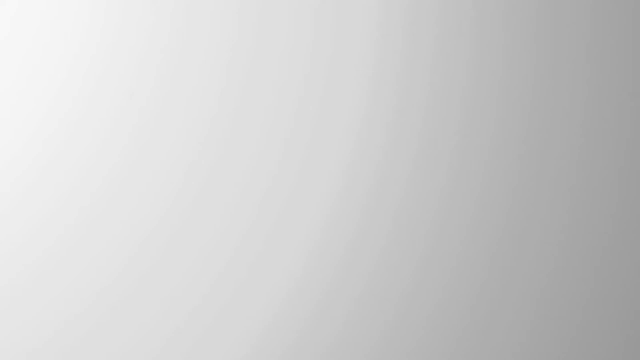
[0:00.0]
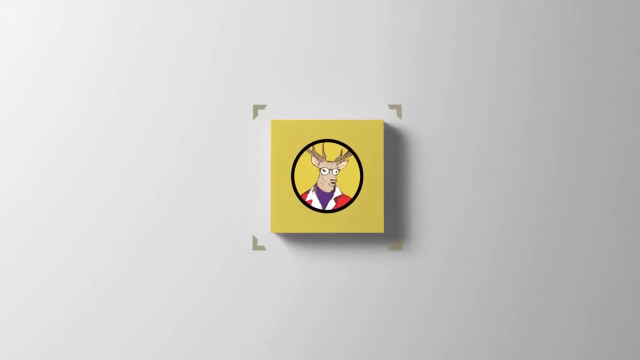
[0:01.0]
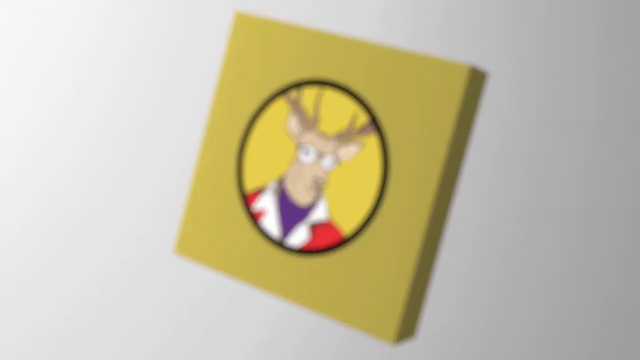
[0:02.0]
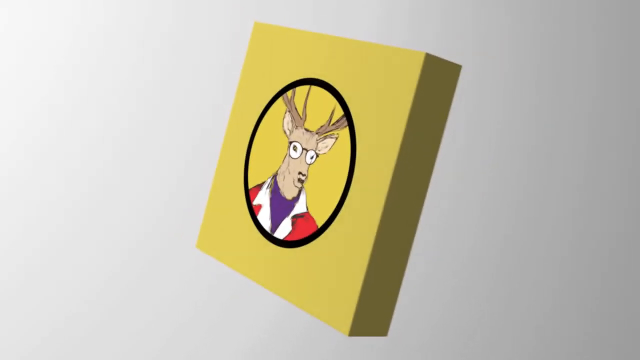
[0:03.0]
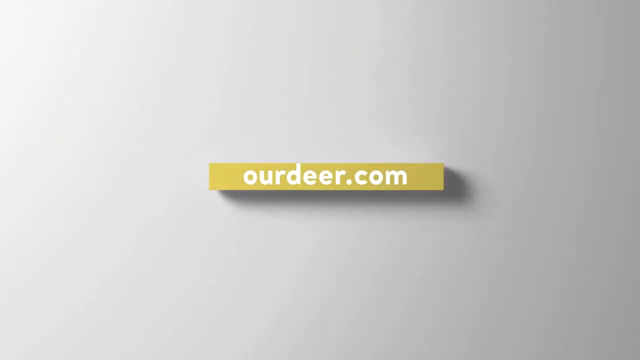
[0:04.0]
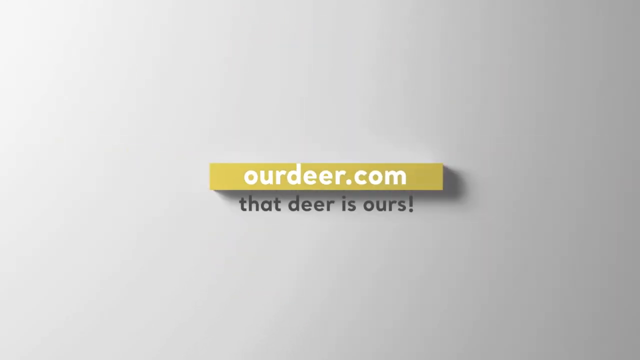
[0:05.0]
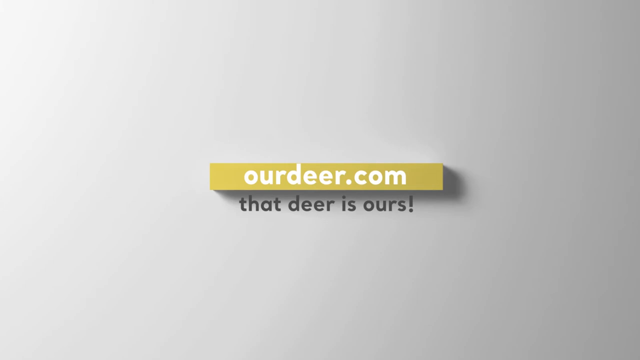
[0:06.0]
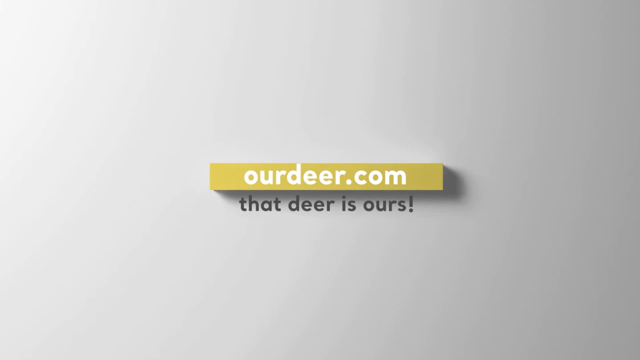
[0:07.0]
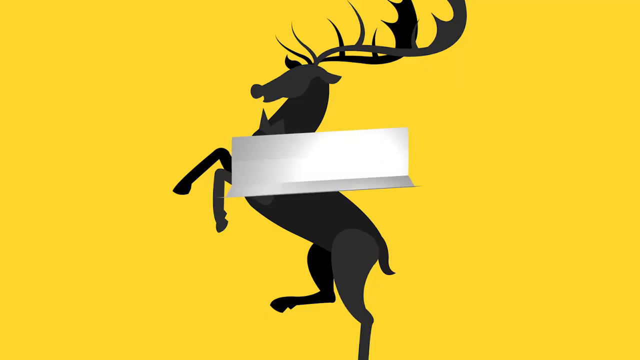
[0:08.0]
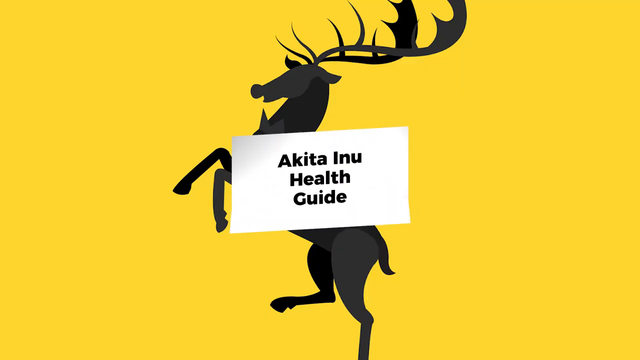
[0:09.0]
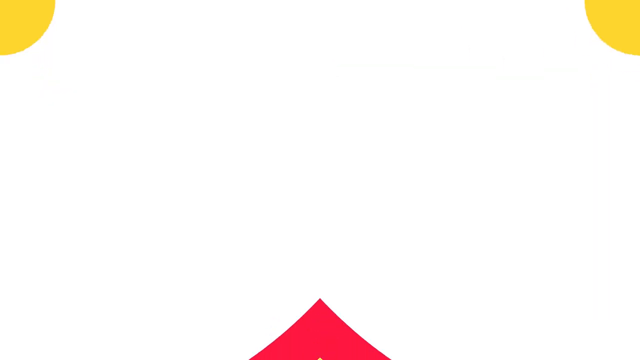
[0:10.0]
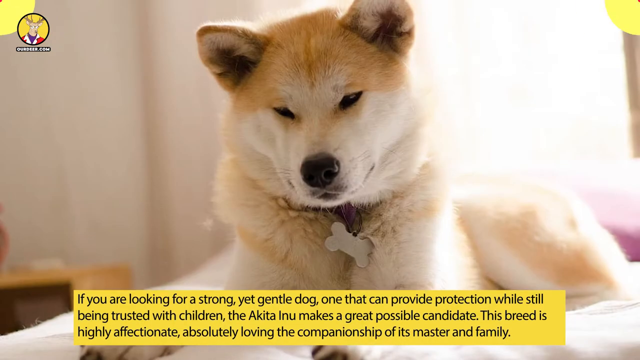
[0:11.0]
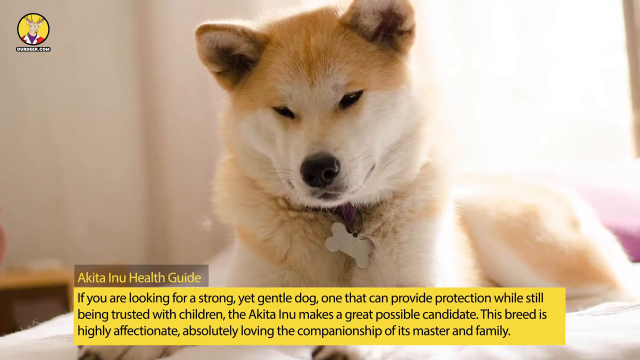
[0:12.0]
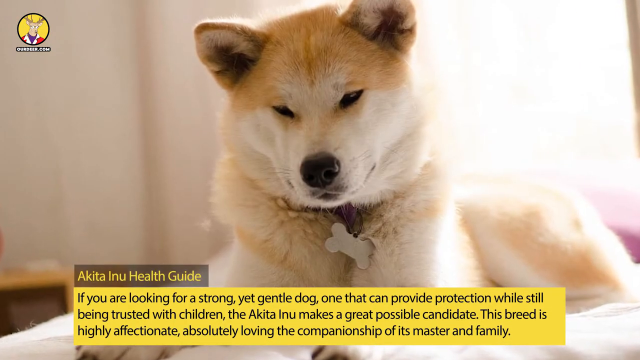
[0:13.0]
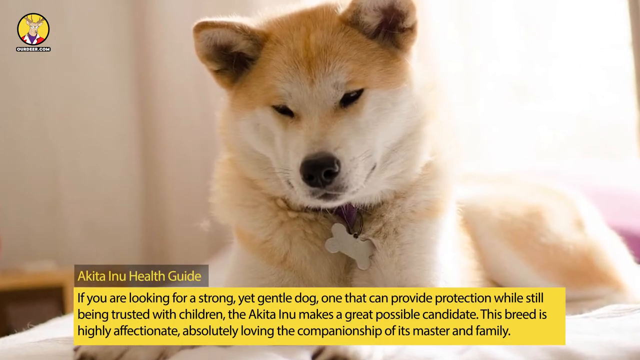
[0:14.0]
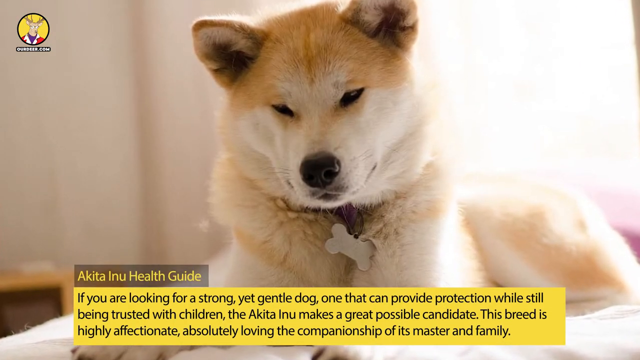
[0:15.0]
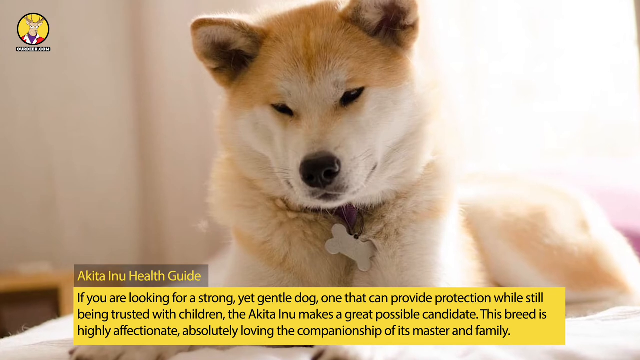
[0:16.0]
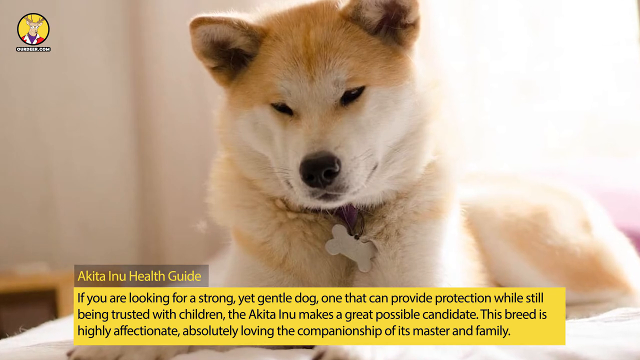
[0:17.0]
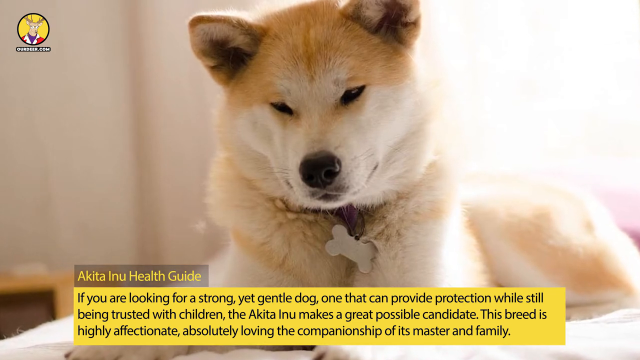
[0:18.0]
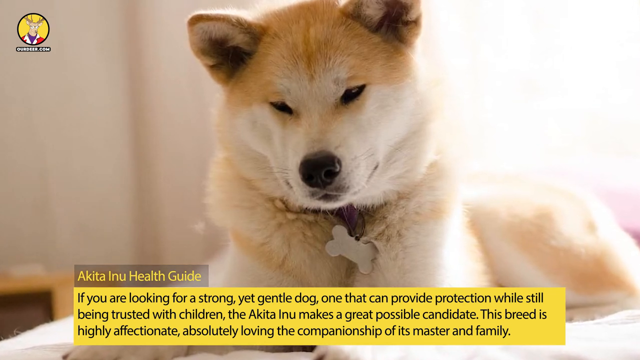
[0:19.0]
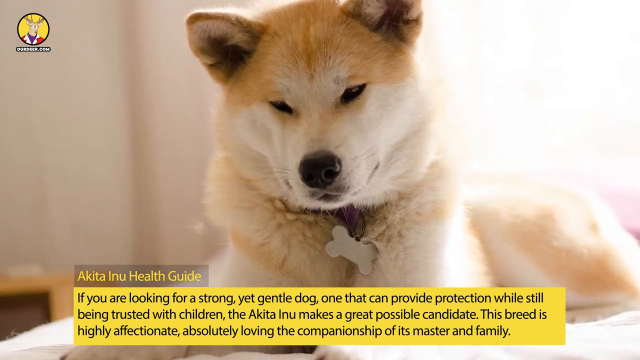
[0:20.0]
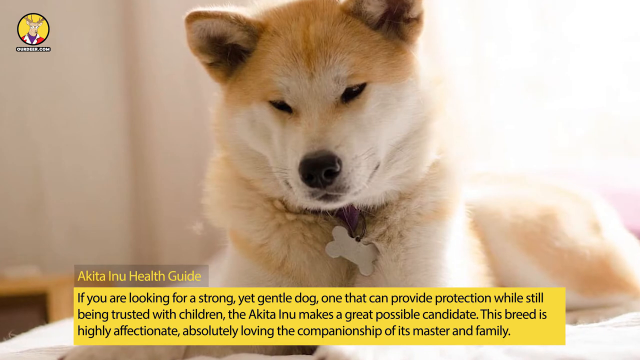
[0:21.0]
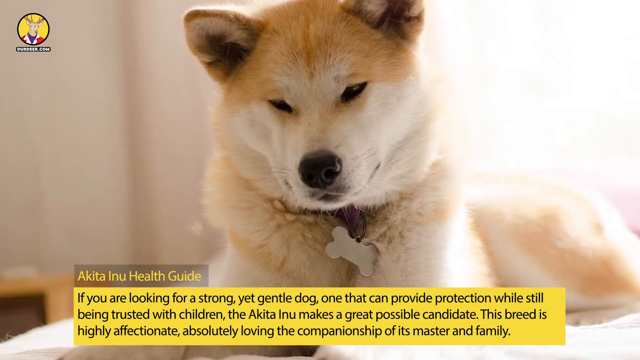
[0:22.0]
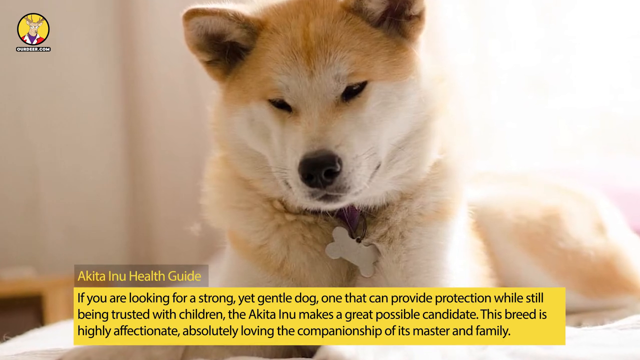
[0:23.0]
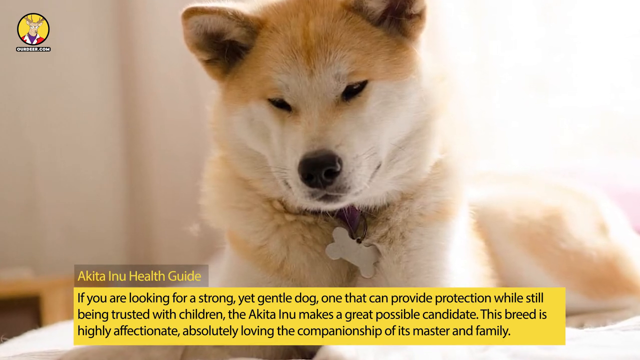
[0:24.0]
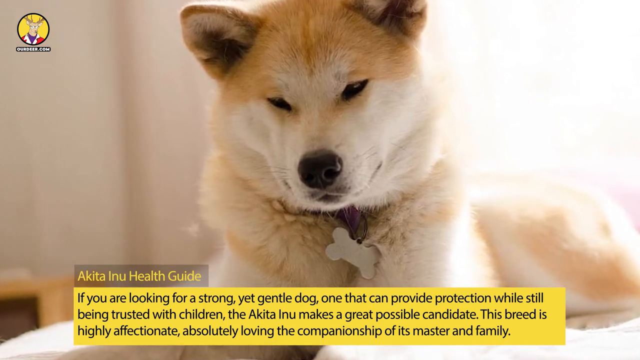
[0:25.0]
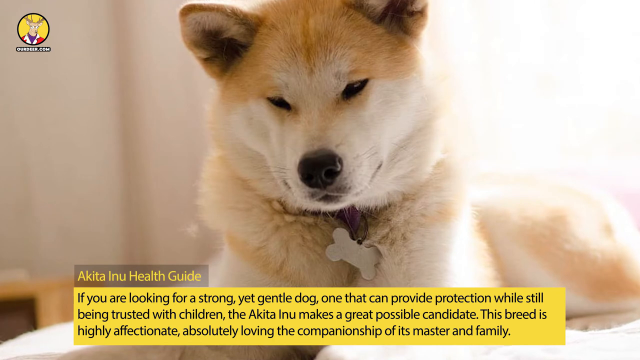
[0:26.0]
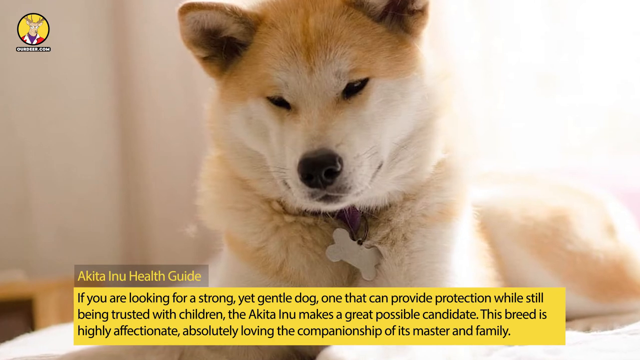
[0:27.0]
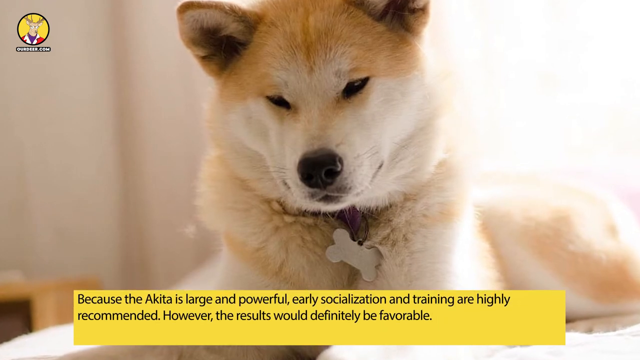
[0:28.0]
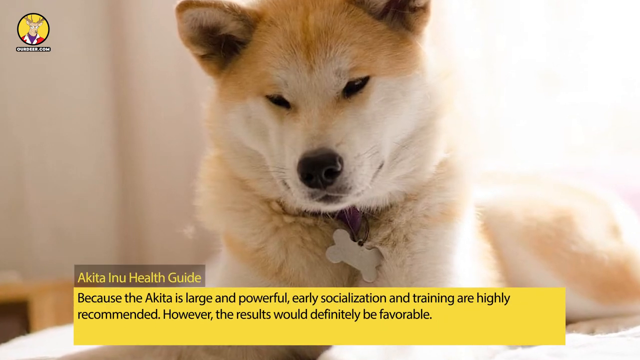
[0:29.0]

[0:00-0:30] The video opens on a white screen. A yellow square pops up in the middle with a circle in it and a deer in a red jacket; it turns in a circle and turns into "outdeer.com". The scene changes to a white screen with a picture of a deer in the middle, and a white square pops up reading "Akita Inu health guide". The screen changes colors and moves to a shot of a dog with the text "Akita Inu health guide" and "if you're looking for a strong yet gentle dog one that can provide protection while still being trusted with children the Akita Inu makes a great possible candidate this breed is highly affectionate absolutely loving the companionship of its master and family". A new screen follows, reading "because the Akita is large and powerful, early socialization and training are highly recommended. However, the results would definitely be favorable." It then goes to a white screen.